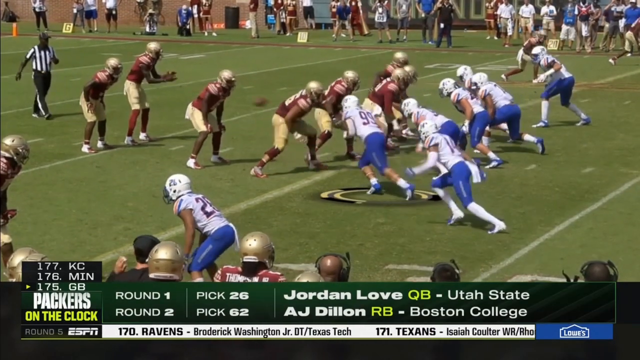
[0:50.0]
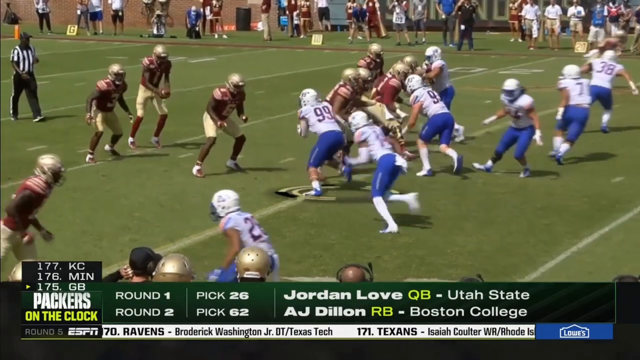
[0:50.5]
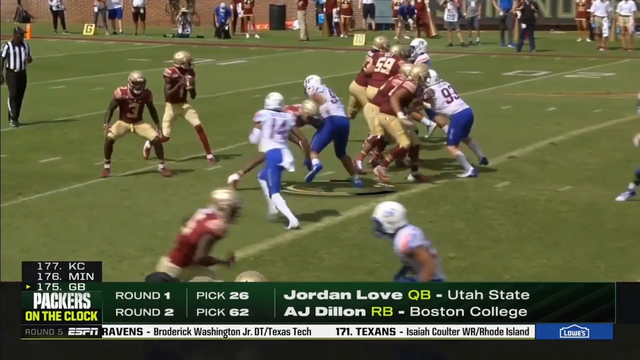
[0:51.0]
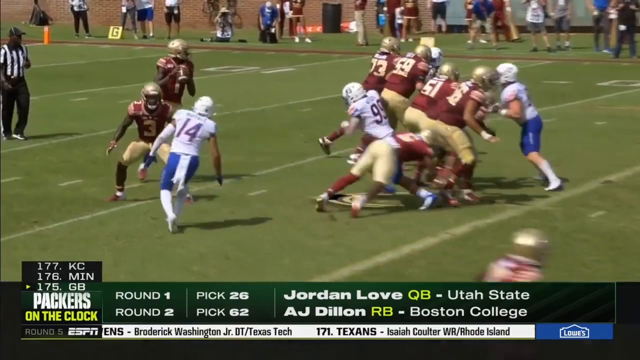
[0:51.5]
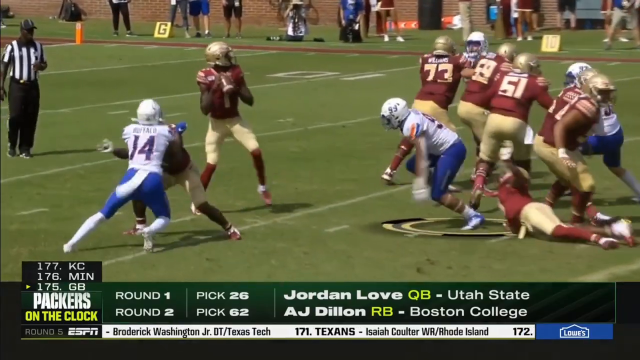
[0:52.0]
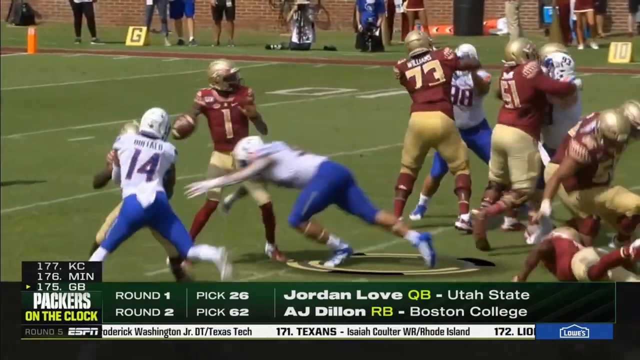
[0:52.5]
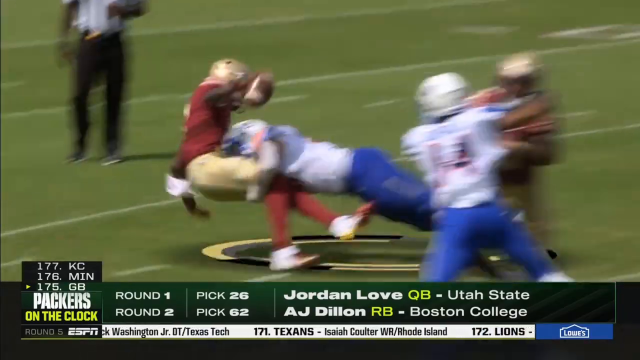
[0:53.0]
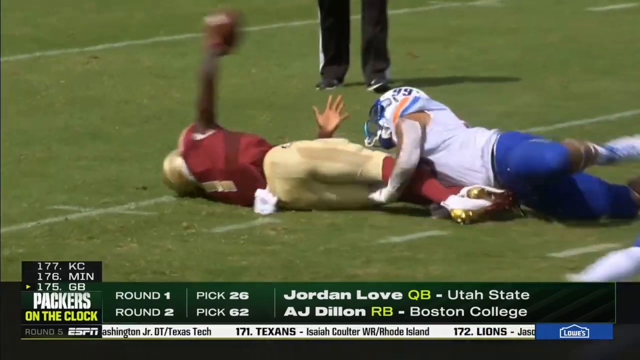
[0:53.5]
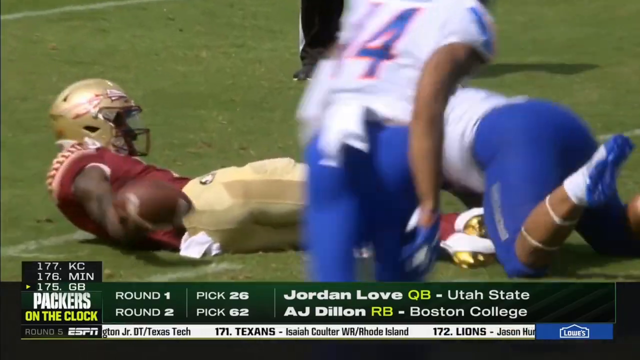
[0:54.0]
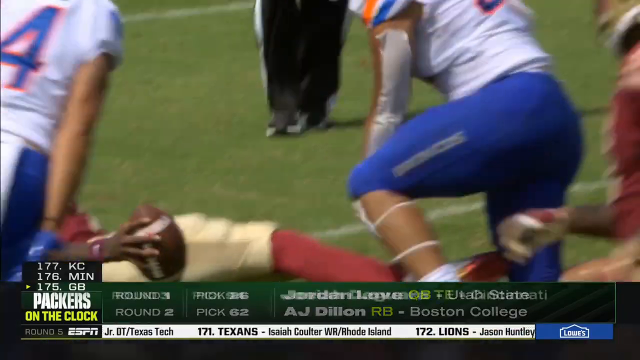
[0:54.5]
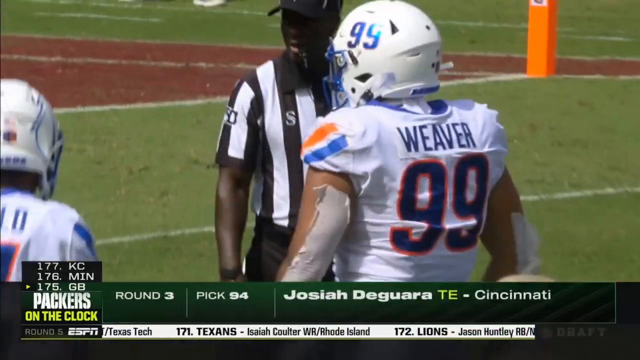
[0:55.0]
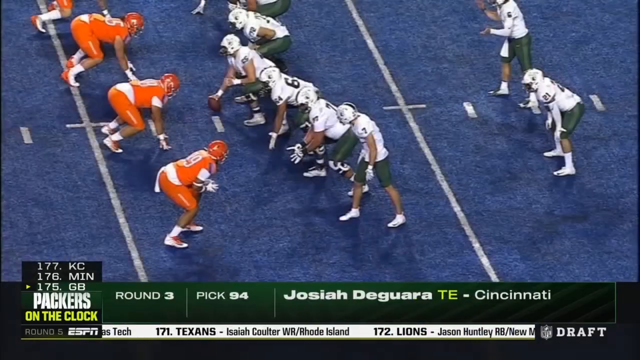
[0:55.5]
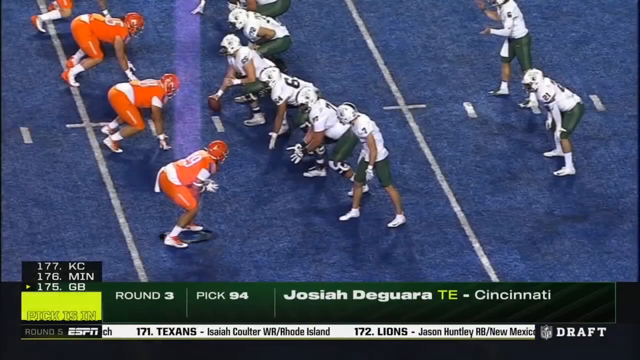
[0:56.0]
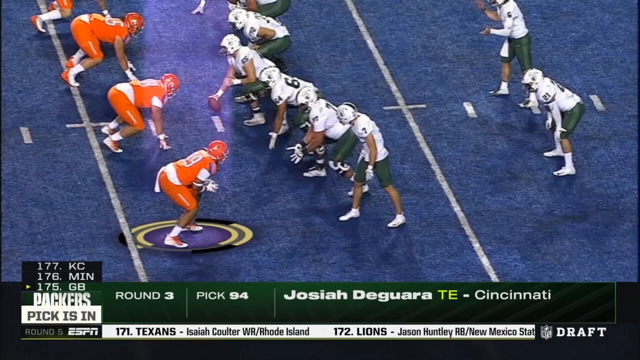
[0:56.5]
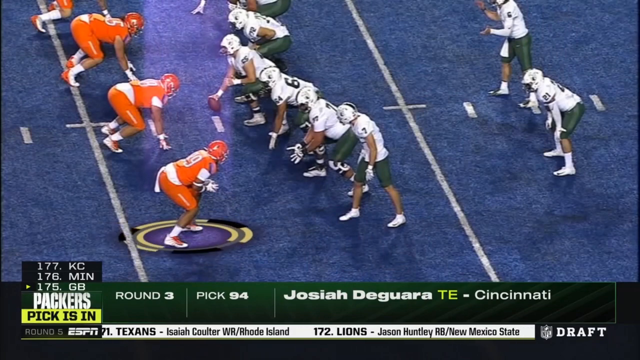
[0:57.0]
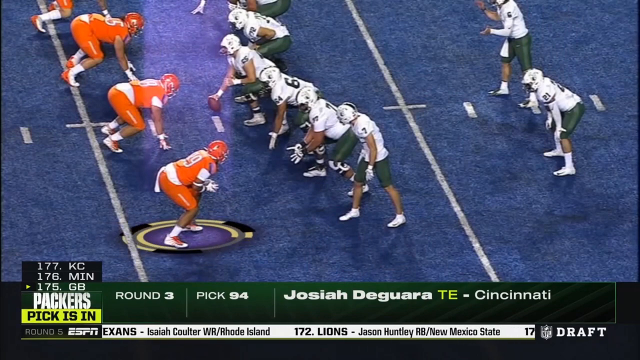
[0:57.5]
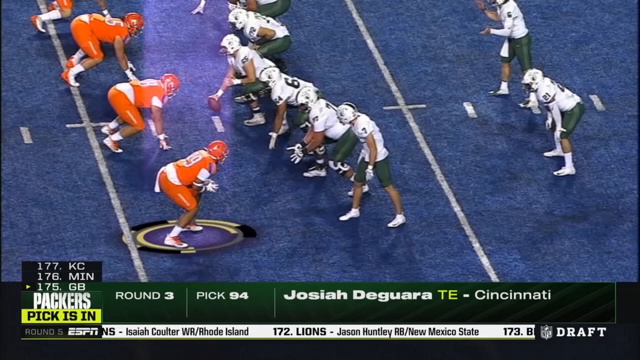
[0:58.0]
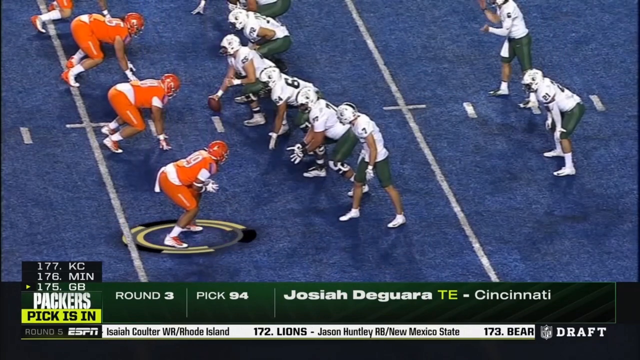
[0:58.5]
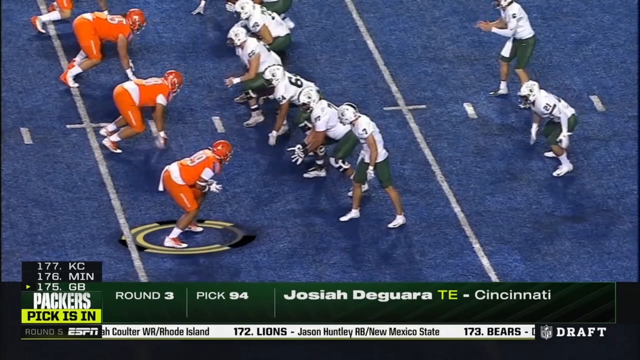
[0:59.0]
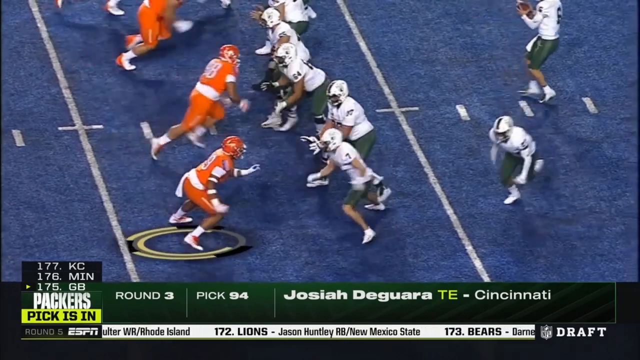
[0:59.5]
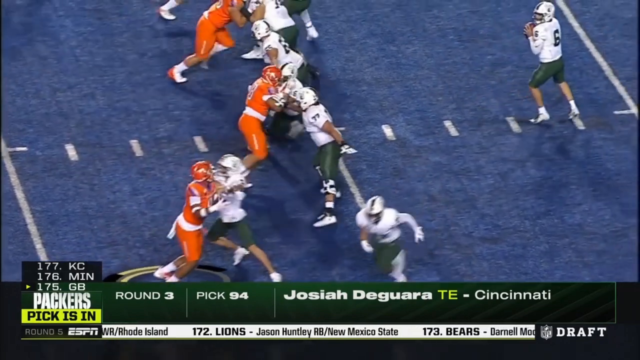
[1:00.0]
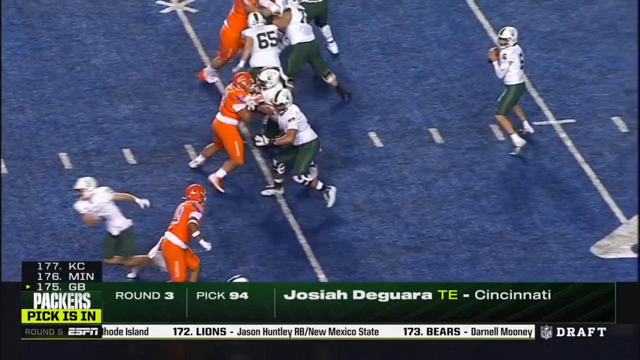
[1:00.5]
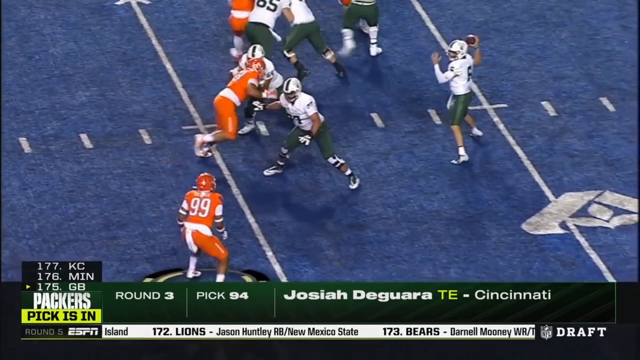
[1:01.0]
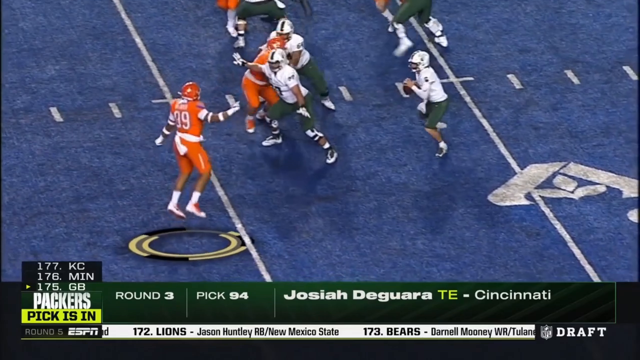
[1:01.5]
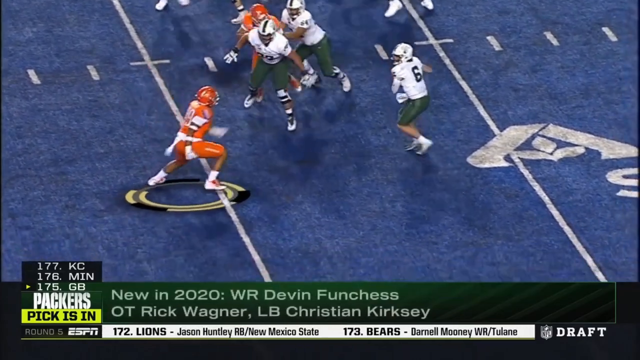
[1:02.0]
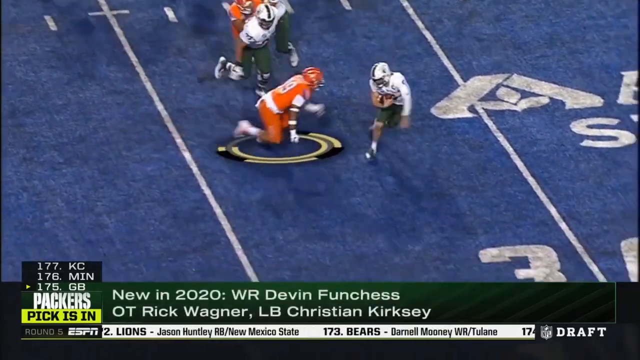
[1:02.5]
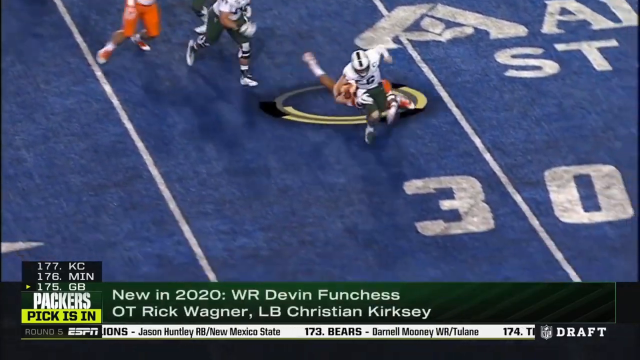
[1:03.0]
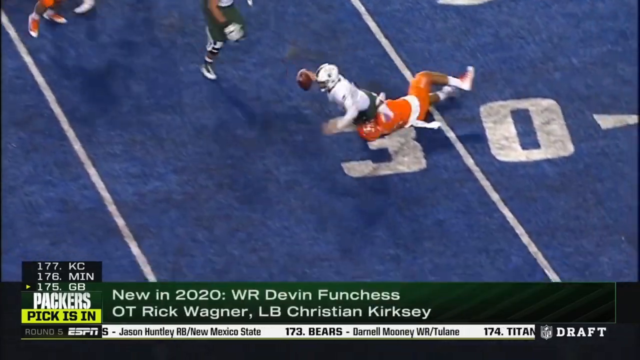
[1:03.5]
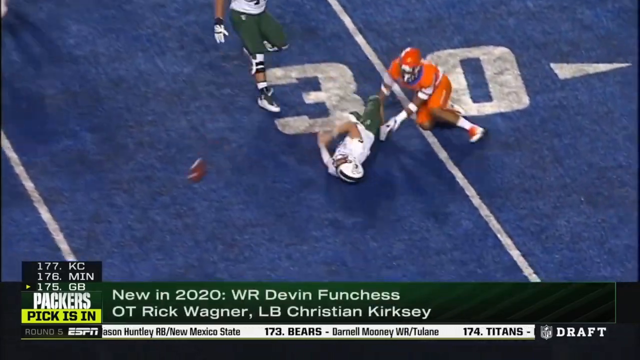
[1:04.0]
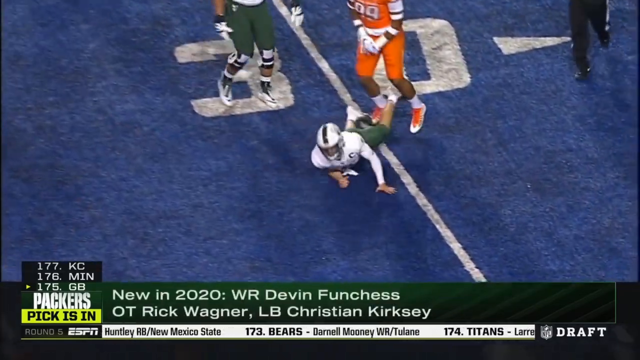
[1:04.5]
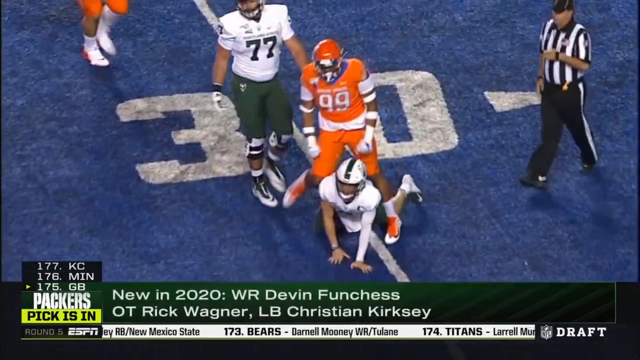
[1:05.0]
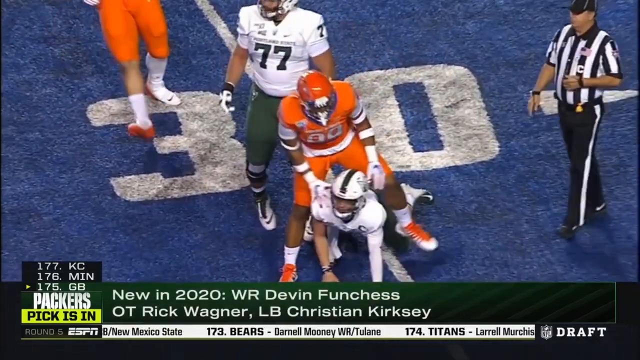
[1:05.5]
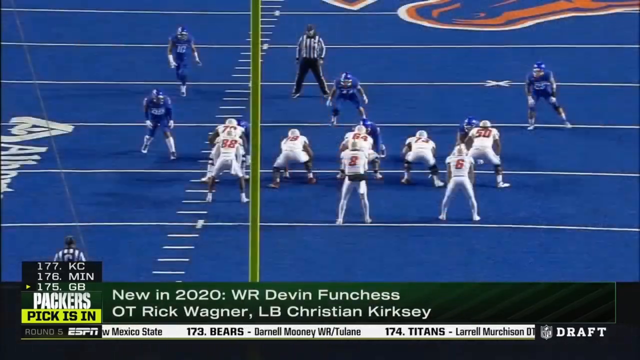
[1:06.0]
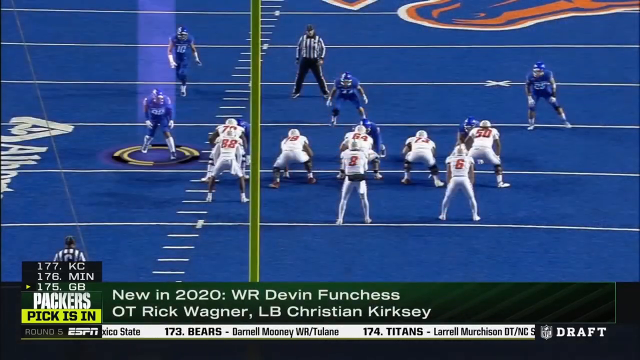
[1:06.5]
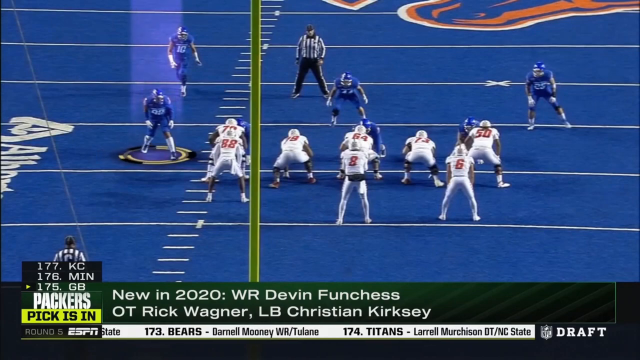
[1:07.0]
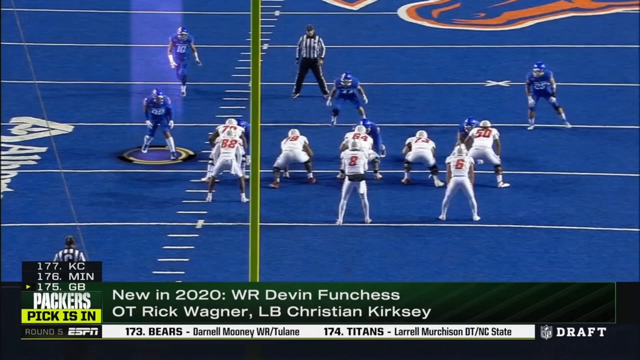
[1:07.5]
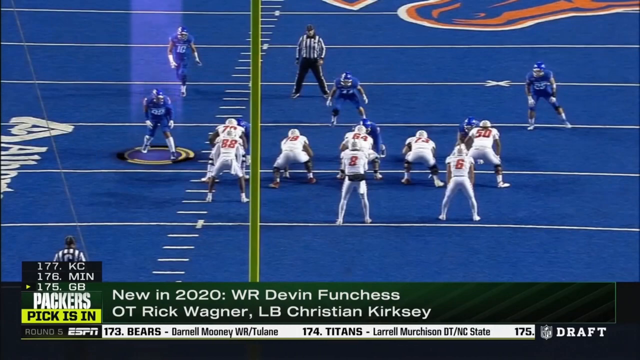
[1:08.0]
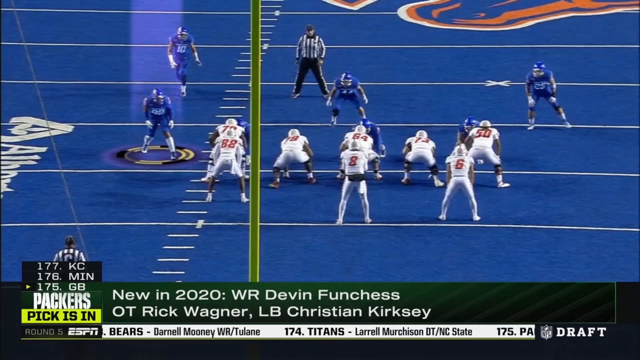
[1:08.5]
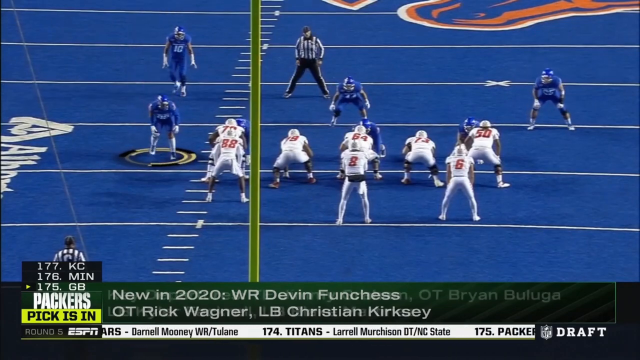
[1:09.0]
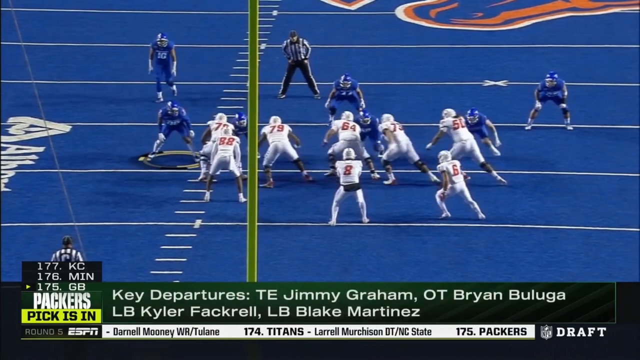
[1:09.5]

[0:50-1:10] The highlighted player runs toward the opposition in red and gold. He dodges the first player who tries to tackle him, and that player falls to the ground. He dodges to his right and another player falls behind him. A teammate blocks a player to the left, and the highlighted player goes for a tackle, spearing the player in red and gold who is holding the football. He goes tumbling to the ground, and the name on the back of his jersey shows it is Weaver. The video then cuts to a team in all orange against a team in white and green. A player on the right is highlighted, presumably Weaver again. The ball is thrown to the quarterback of the white and green team. Weaver, the highlighted player, jumps in the air to fake or intercept a pass, then runs toward the player with the ball, who is trying to shuffle left, and tackles him to the ground. Another play follows in which the players are wearing blue, and Weaver is highlighted on the left side of the screen, but it ends before the play can be seen.